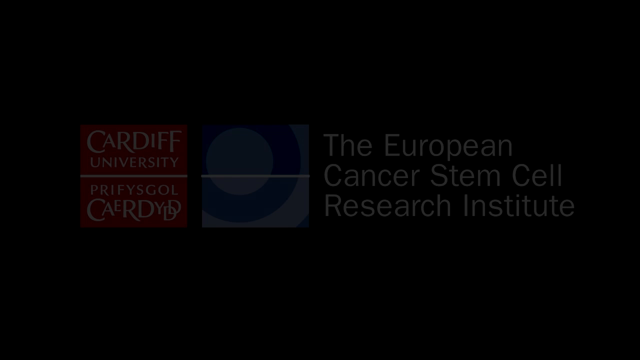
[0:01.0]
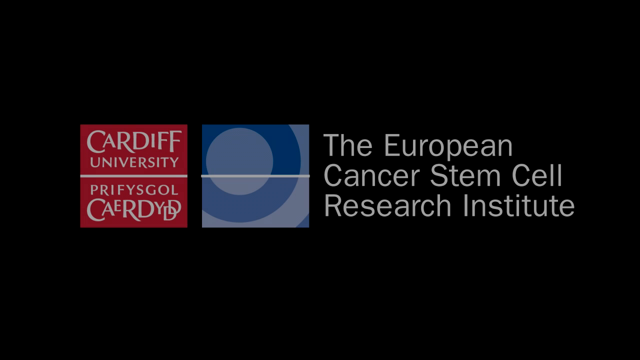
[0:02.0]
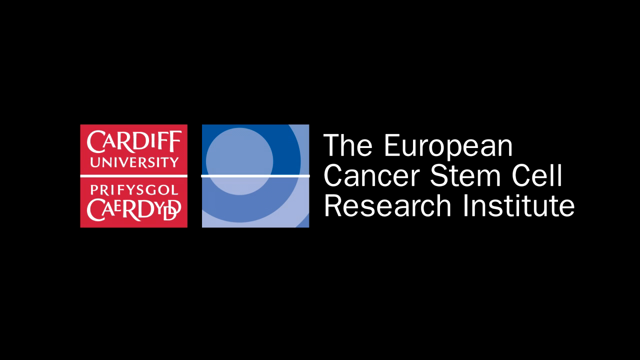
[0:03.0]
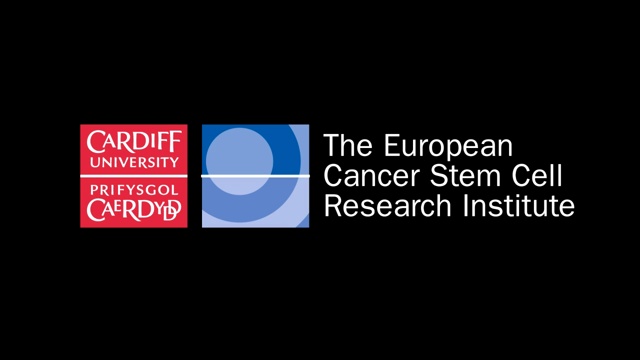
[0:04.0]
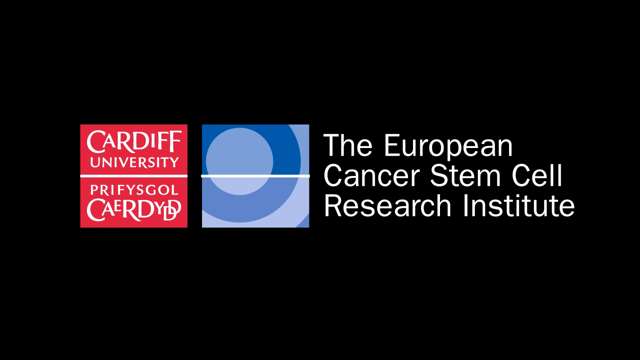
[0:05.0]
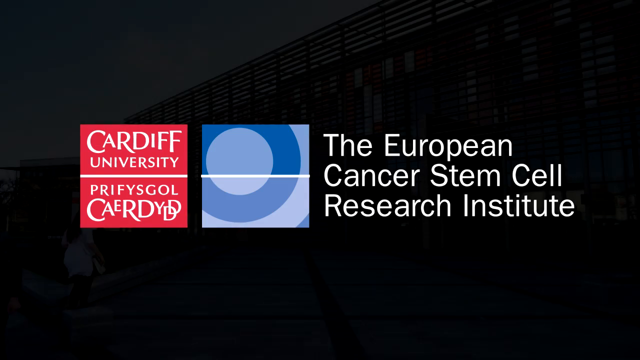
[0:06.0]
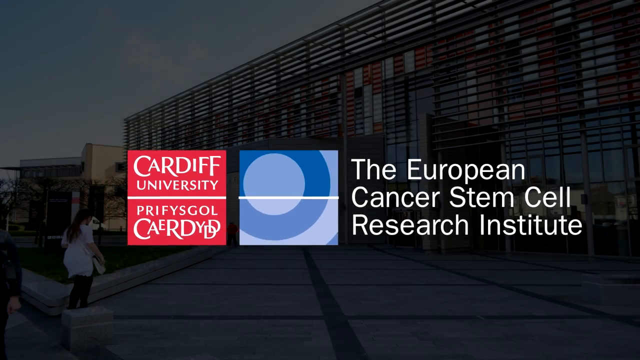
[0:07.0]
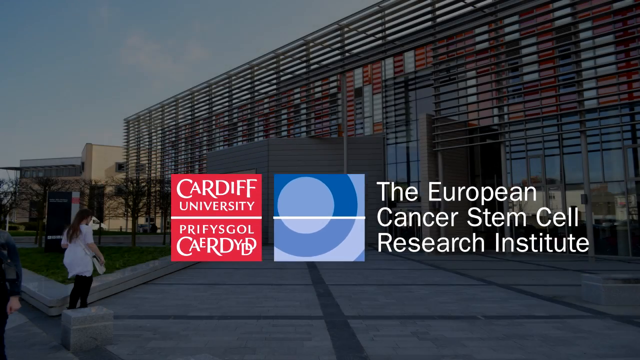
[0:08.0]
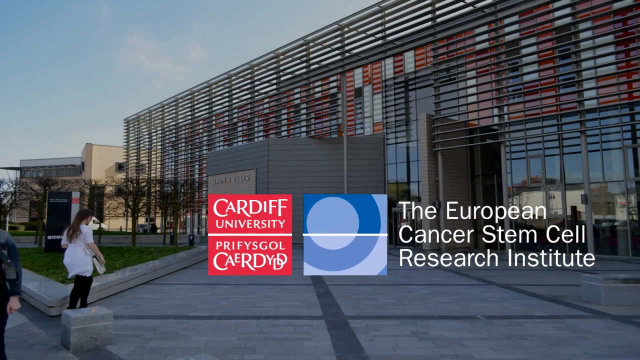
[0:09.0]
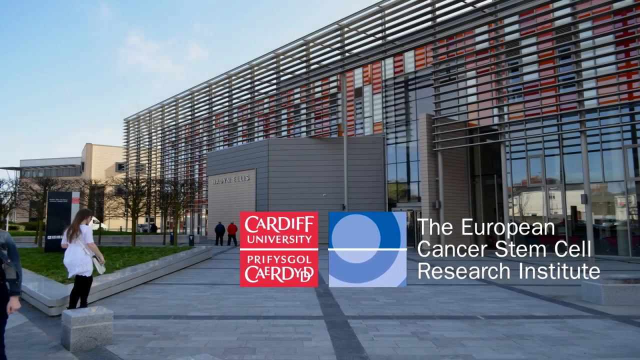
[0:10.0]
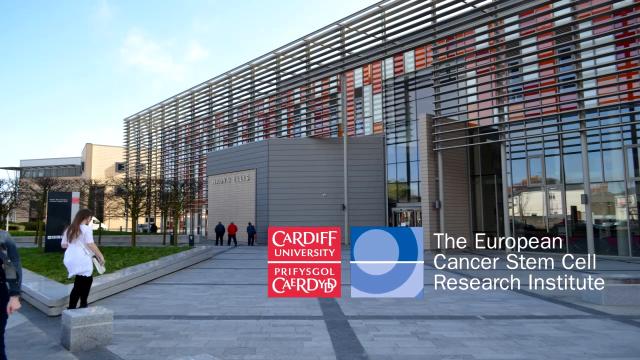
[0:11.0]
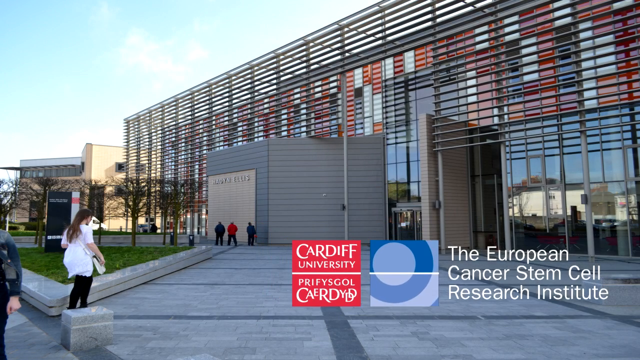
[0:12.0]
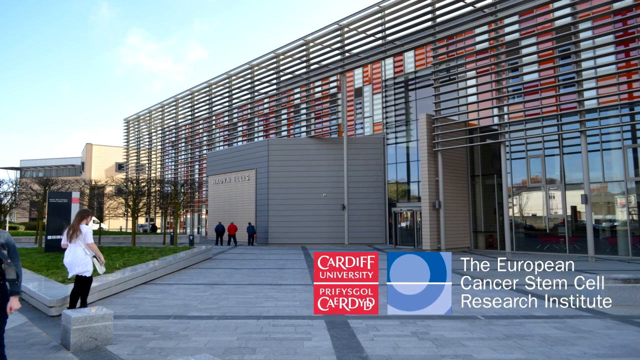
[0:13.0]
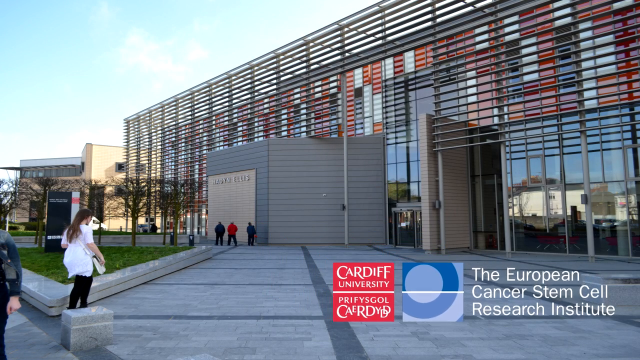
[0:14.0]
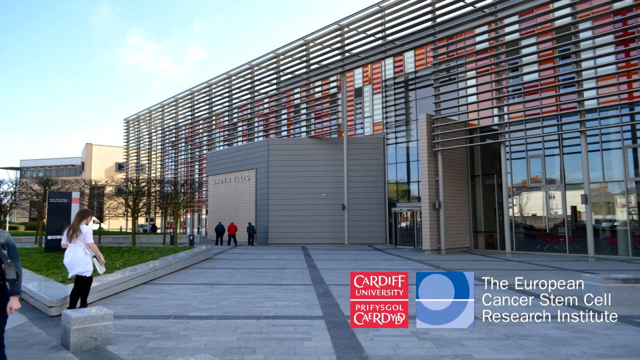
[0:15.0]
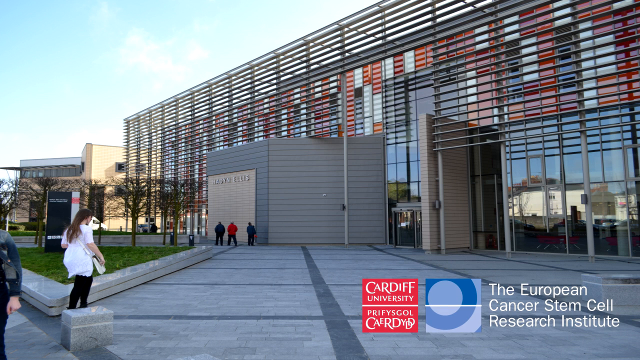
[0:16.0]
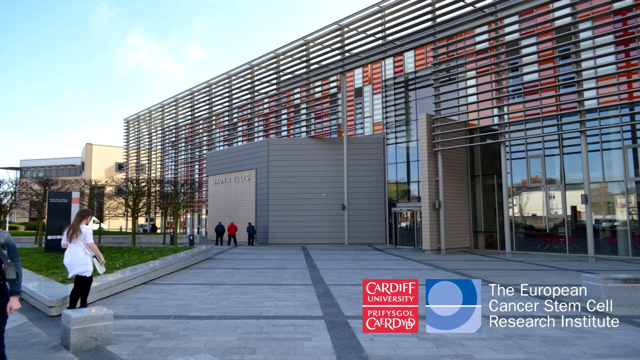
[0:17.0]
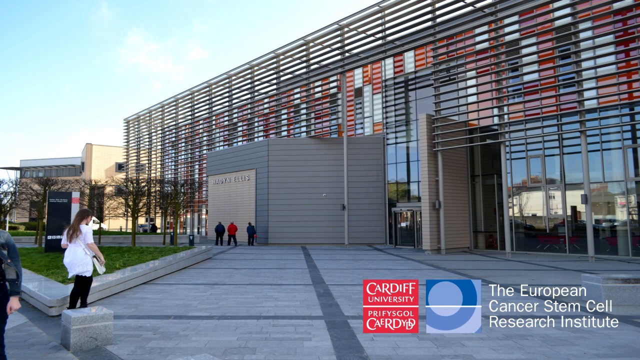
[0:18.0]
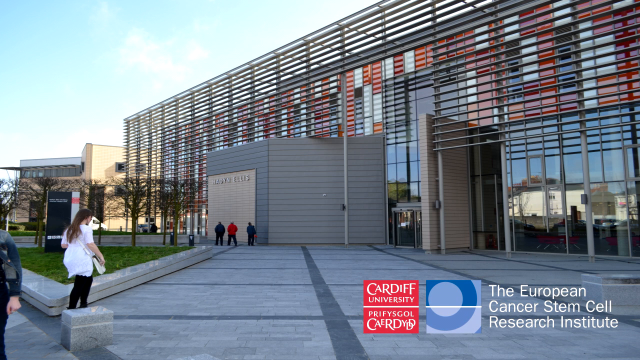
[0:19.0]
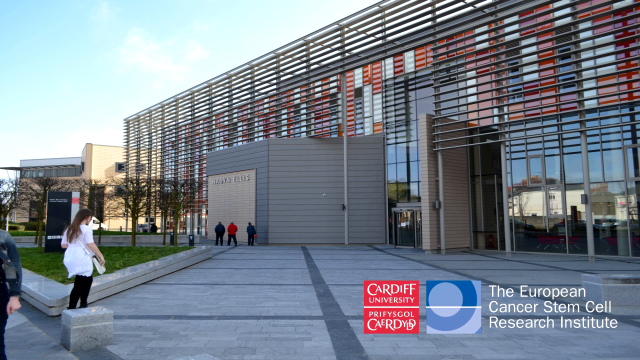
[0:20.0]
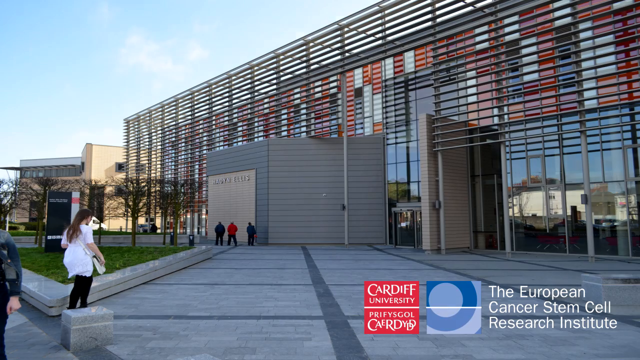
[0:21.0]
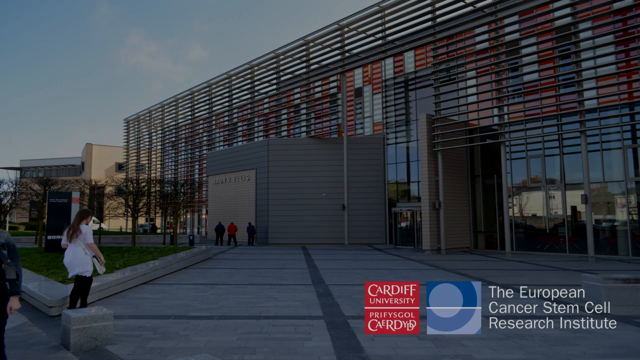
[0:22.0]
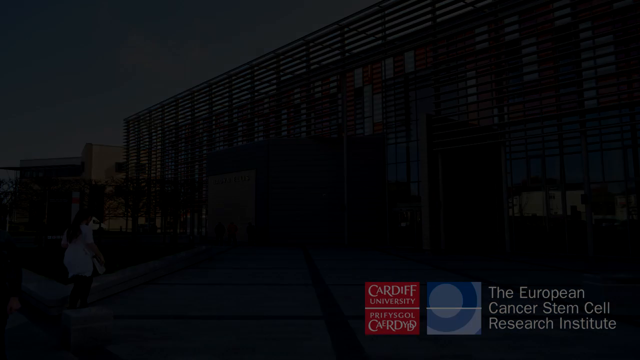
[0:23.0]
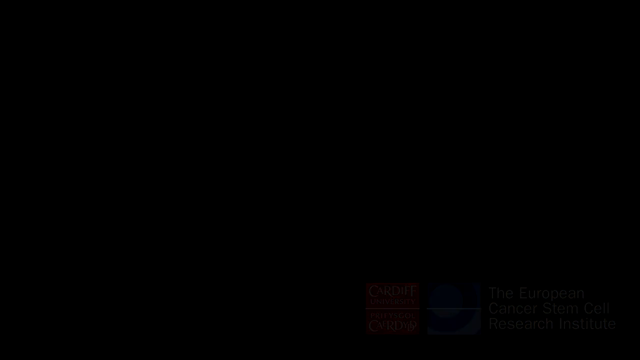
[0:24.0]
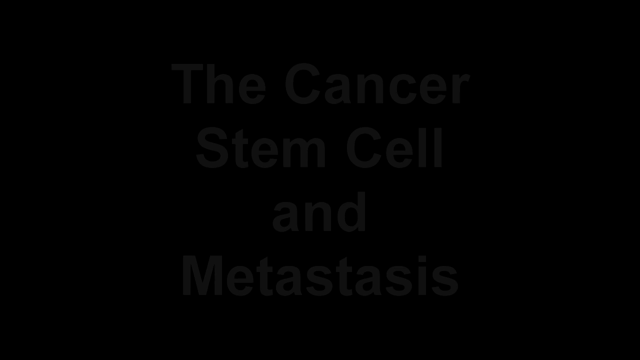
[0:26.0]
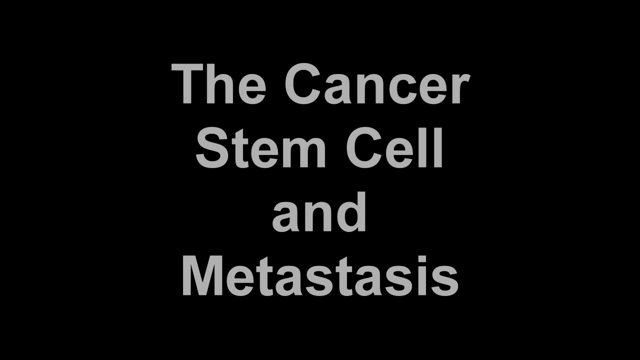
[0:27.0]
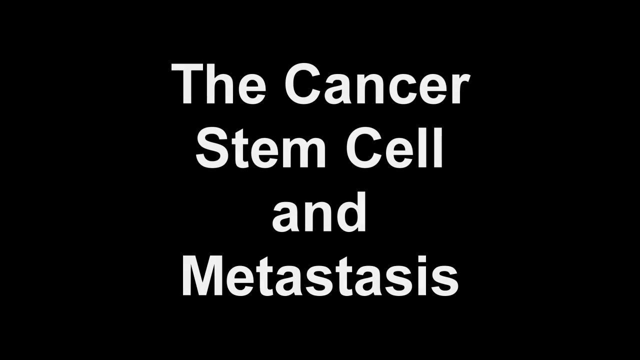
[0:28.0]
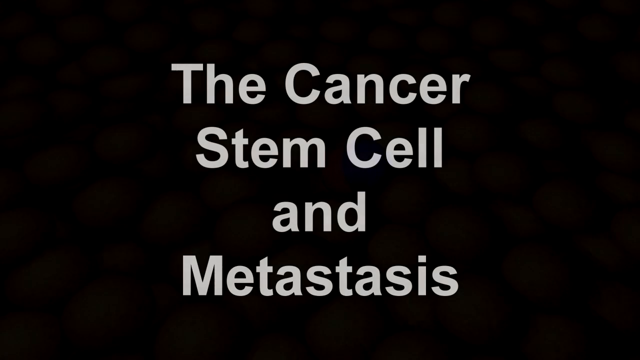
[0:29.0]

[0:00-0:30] The video opens on a black screen. In the center, two logos appear, for Cardiff University and the European Cancer Stem Cell Research Institute. The logo is then placed on the outside of a photo of a large building that has bars in front of it, with people or students walking across the campus. The logo gets smaller and smaller before settling in the bottom right corner of the screen. The screen fades to black again, and white text appears in the center reading "the cancer stem cell and metastasis." An image starts to appear behind the text, apparently showing tan-colored cells clustered close together. Two red cells are formed together in the center, underneath the white text.